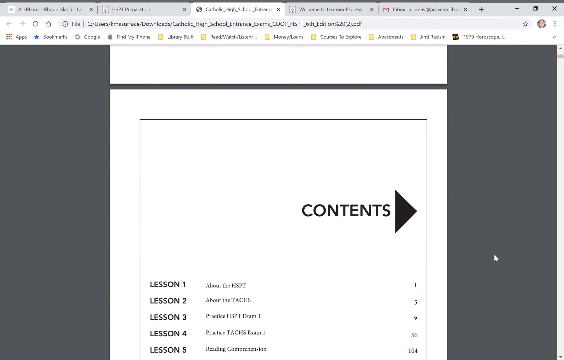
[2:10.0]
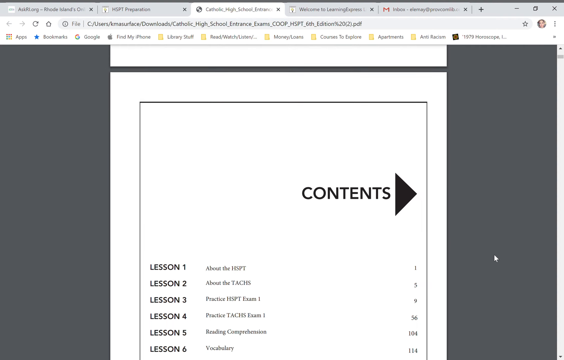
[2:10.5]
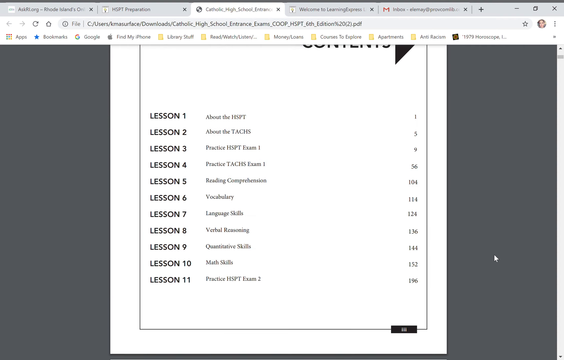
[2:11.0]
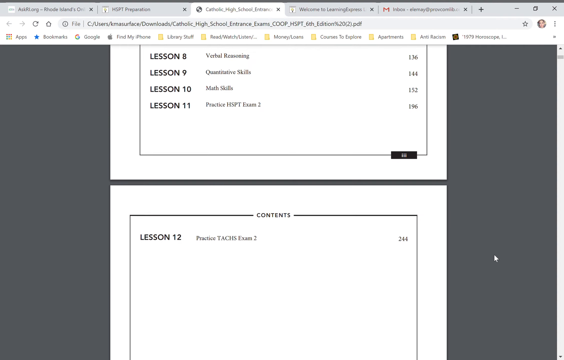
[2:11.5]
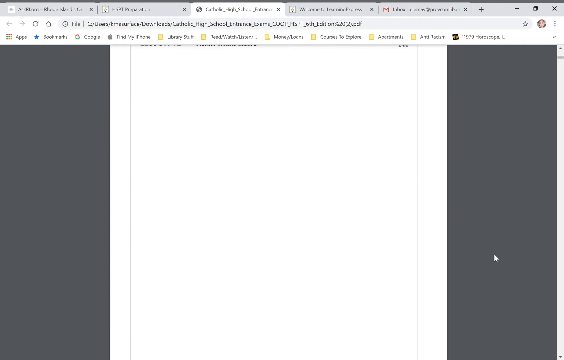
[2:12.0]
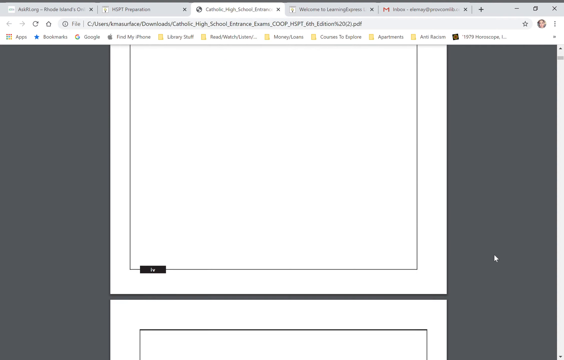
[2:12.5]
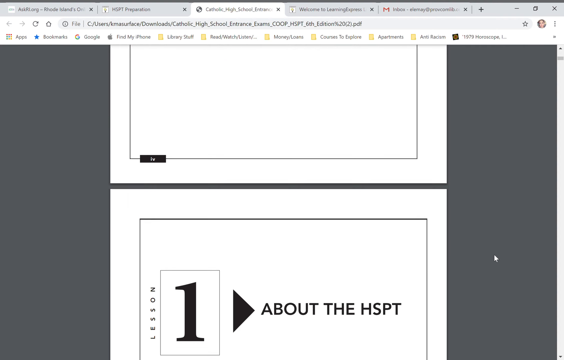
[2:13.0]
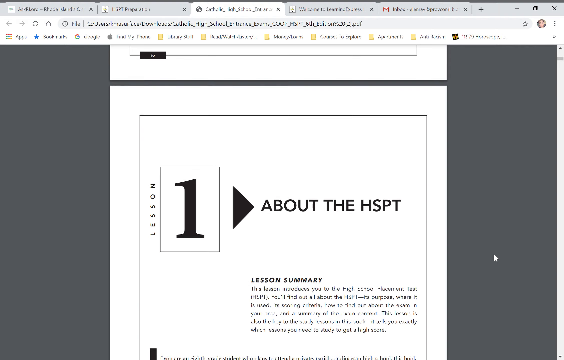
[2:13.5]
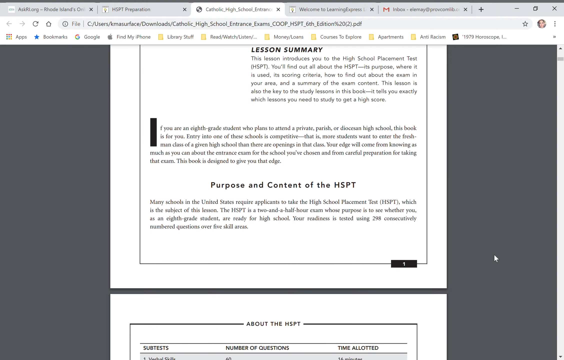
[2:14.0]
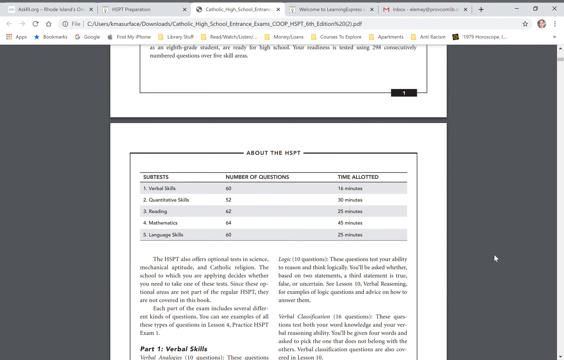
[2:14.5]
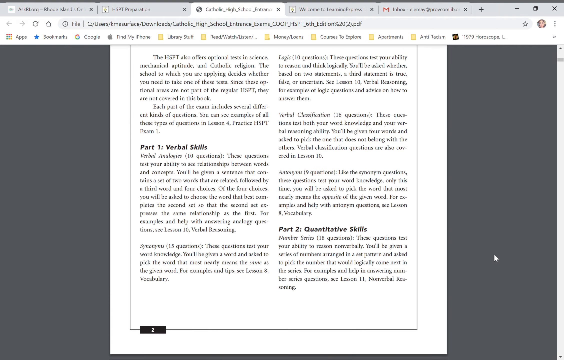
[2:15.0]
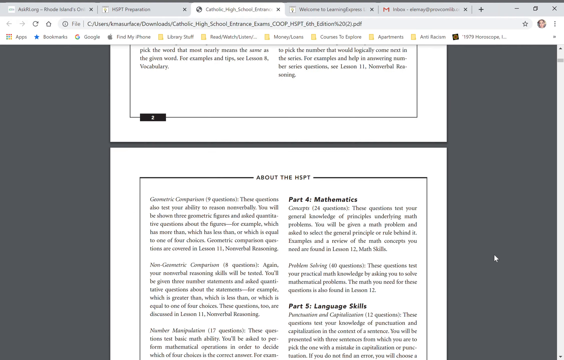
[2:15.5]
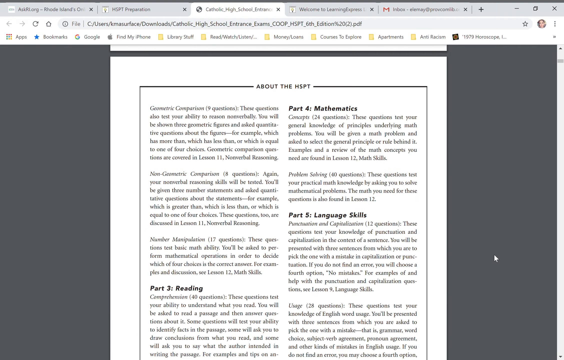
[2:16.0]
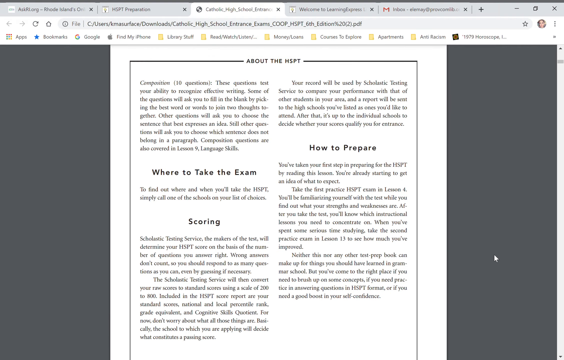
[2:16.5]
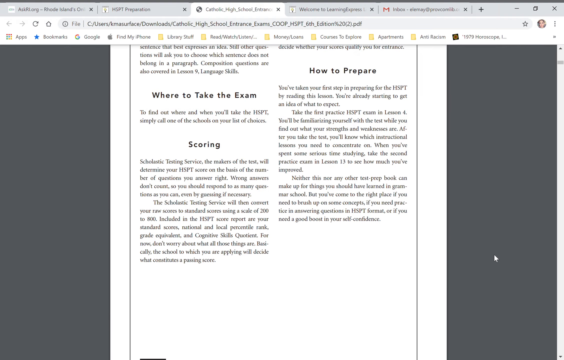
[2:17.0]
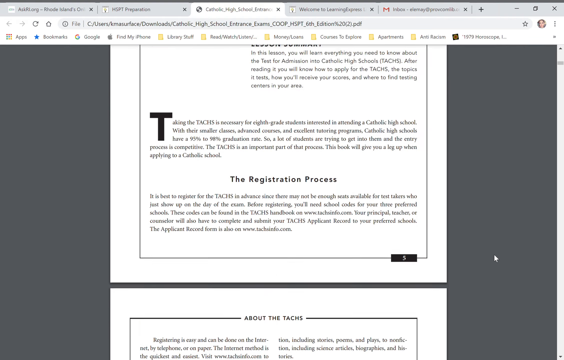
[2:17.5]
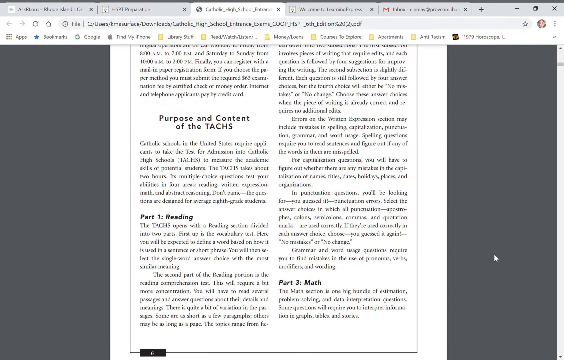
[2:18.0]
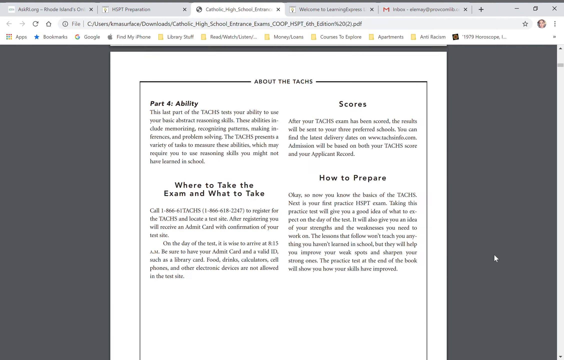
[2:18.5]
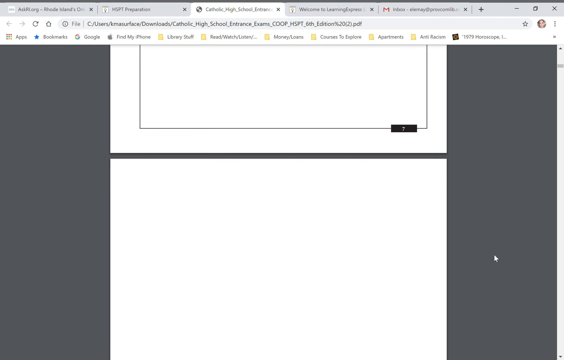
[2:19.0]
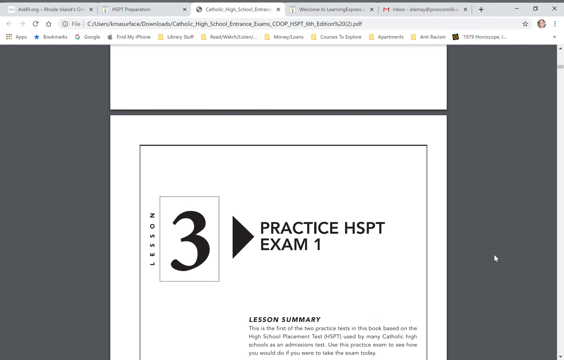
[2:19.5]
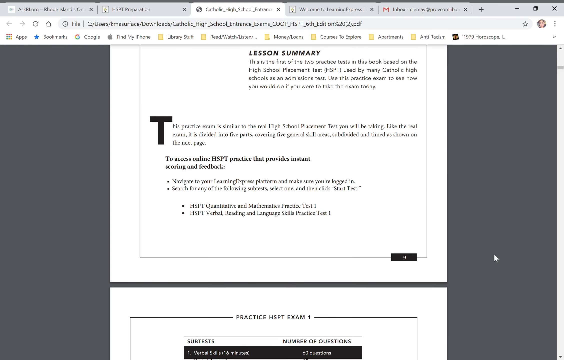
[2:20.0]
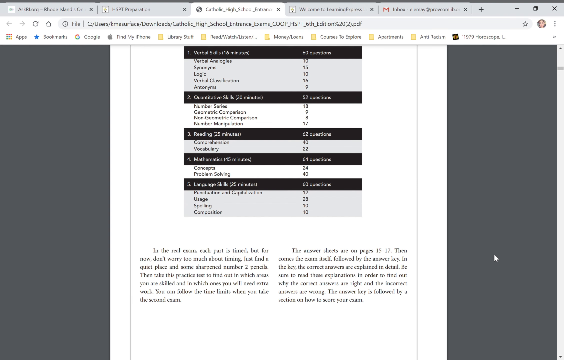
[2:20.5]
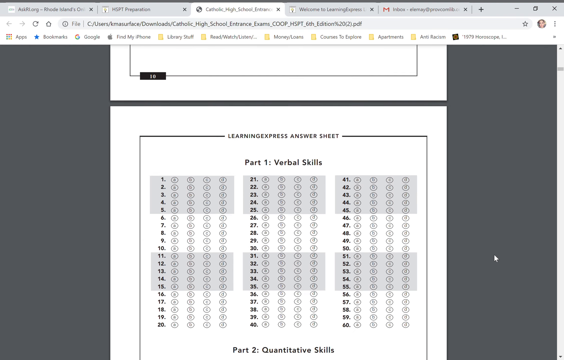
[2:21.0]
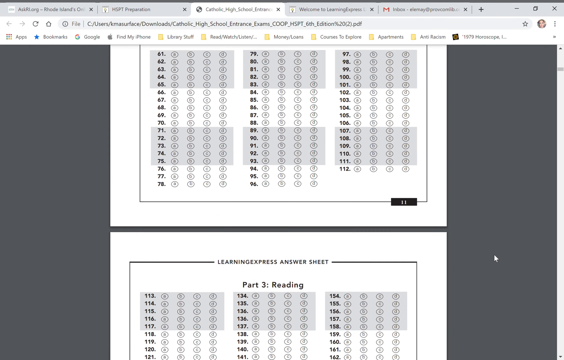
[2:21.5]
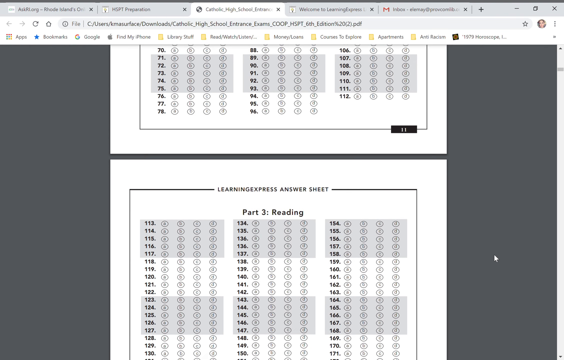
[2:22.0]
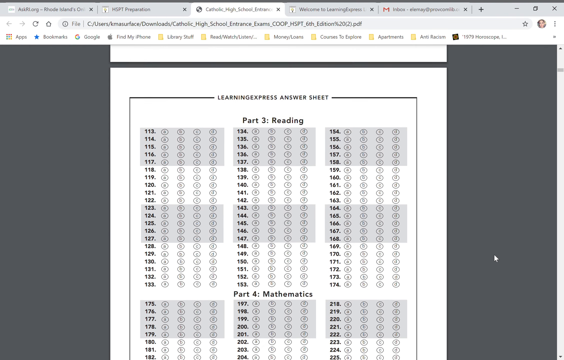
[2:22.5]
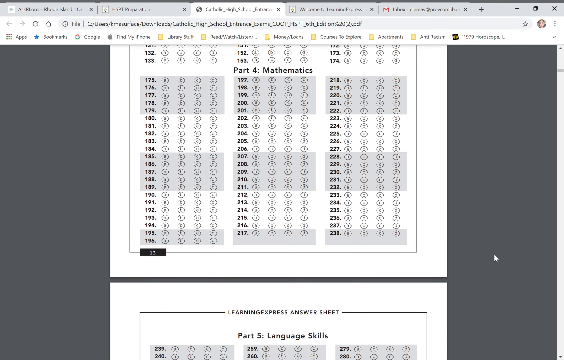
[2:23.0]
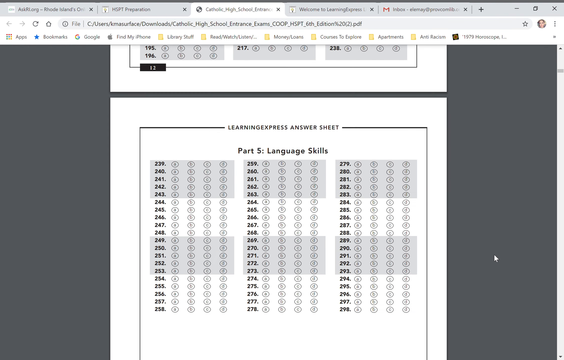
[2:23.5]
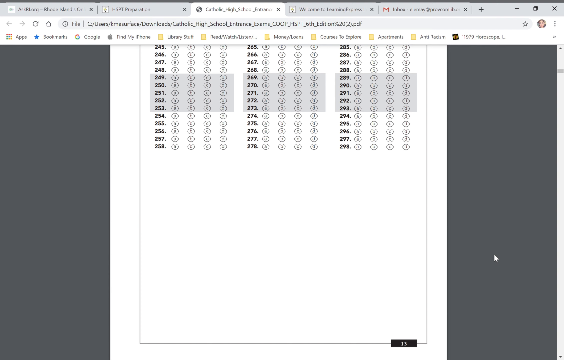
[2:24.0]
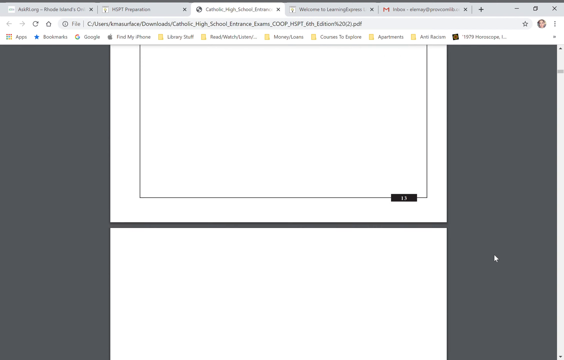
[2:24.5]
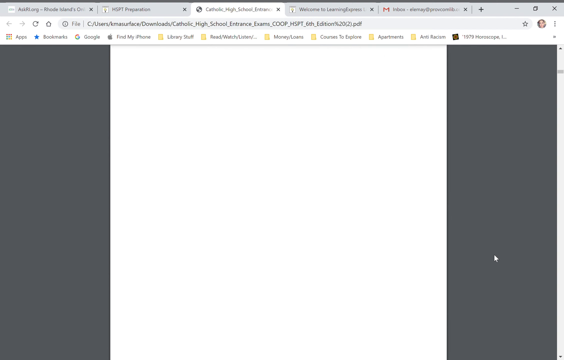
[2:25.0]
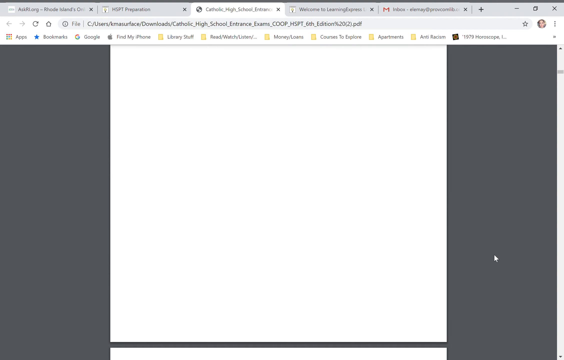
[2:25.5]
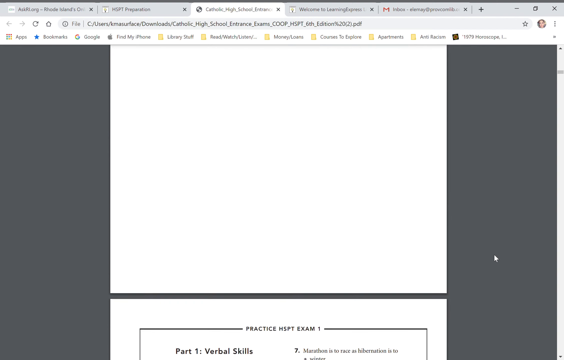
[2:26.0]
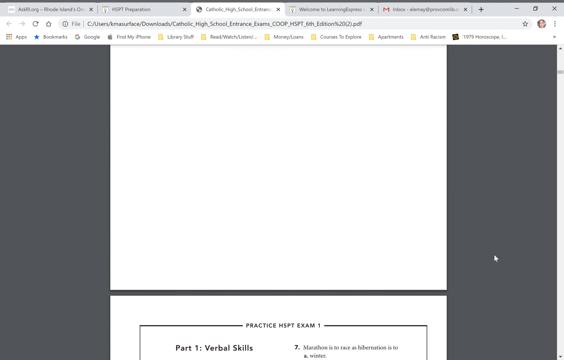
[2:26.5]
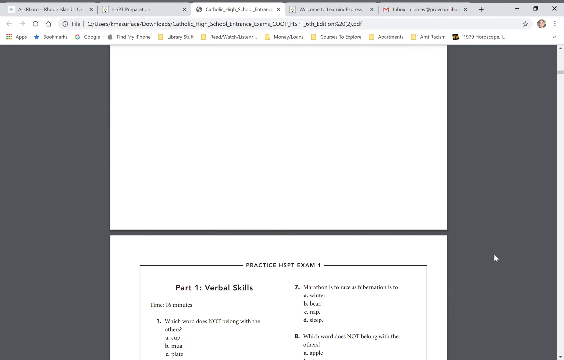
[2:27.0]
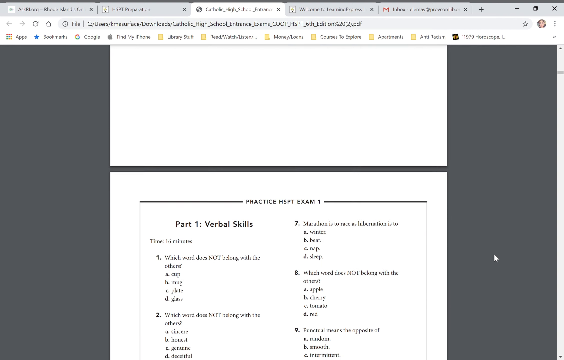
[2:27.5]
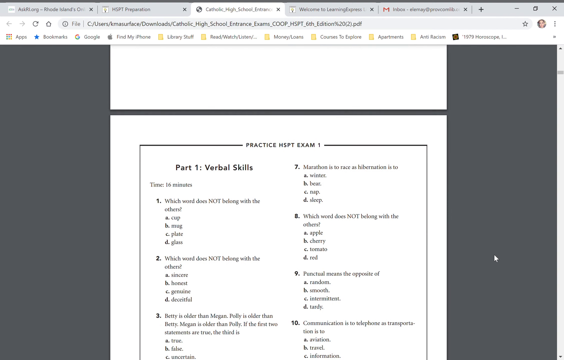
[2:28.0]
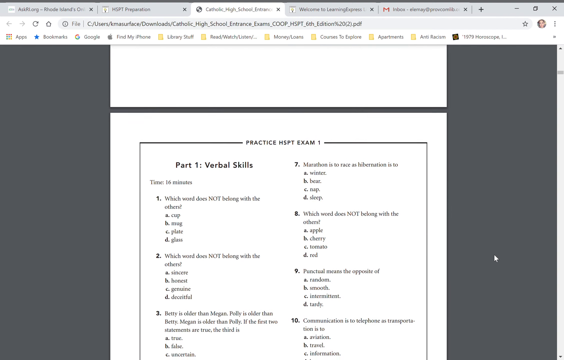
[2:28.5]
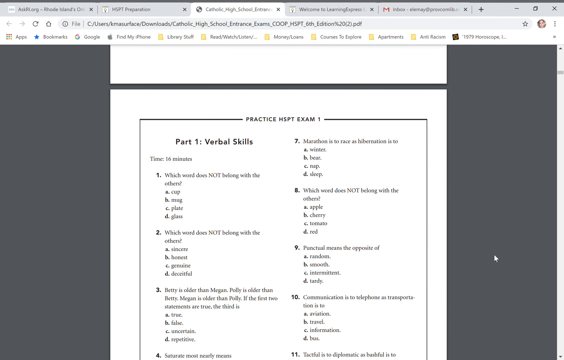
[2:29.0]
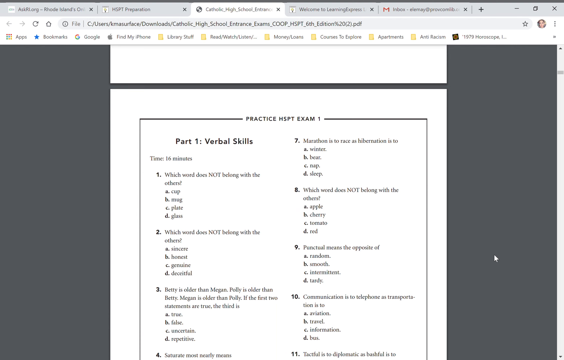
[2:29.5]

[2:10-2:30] The contents page lists lessons: lesson one about the HSPT, lesson two about the TACS, lesson three practice exams, and so on from lesson one to lesson 11. It scrolls quickly to a second contents page with only one entry, lesson 12, the practice TACS exam two. Past that page, lesson one about the HSPT begins with a one-paragraph lesson summary, then two more paragraphs on the purpose and content of the HSPT. The next page about the HSPT has about seven paragraphs, covering part one, verbal skills, and part two, quantitative skills. The following page continues part two, then part three, reading, part four, mathematics, and part five, language skills, with about 10 paragraphs. The next page has a couple more paragraphs on where to take the exam, scoring, and how to prepare. The view scrolls quickly past the first page of chapter two, titled "about the TACS", and down past most of it to part three, the practice HSPT exam one, which has a similar setup to lessons one and two. Past that is a page listing the subtests and the number of questions in each, followed by a couple of pages of blank fill-in bubbles.